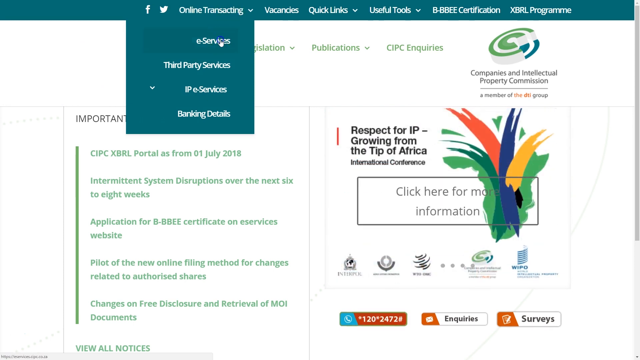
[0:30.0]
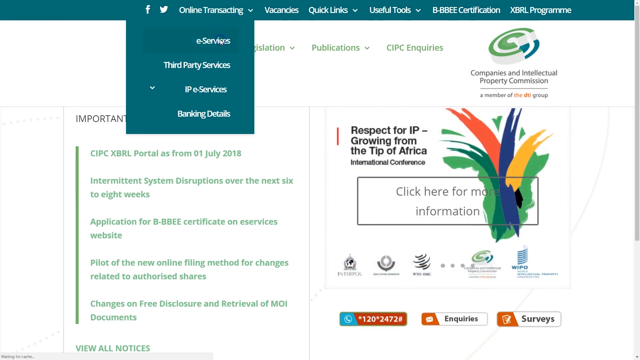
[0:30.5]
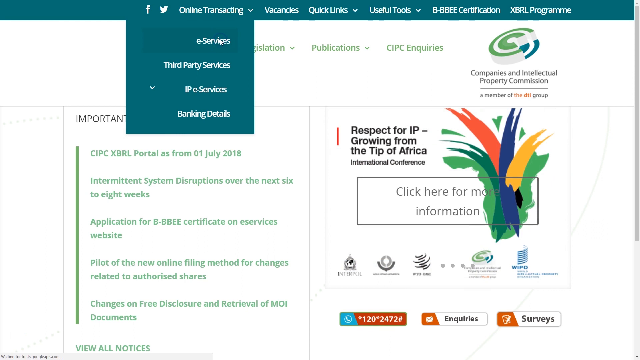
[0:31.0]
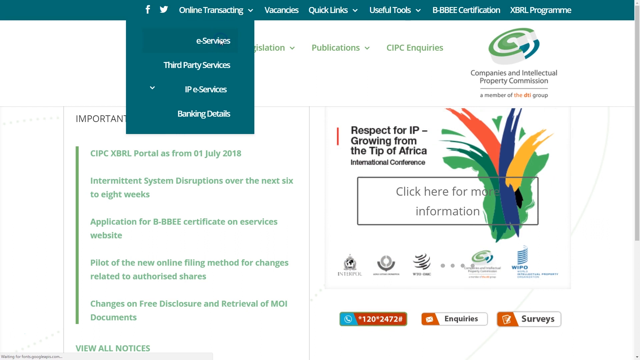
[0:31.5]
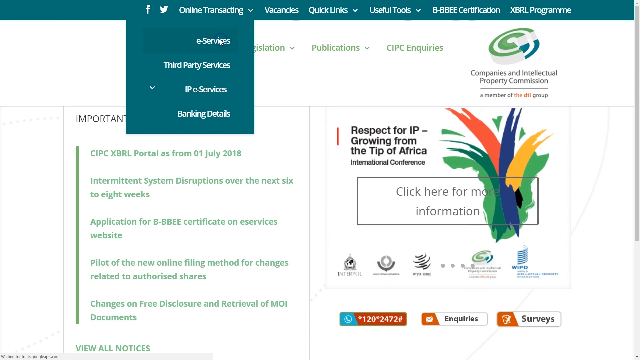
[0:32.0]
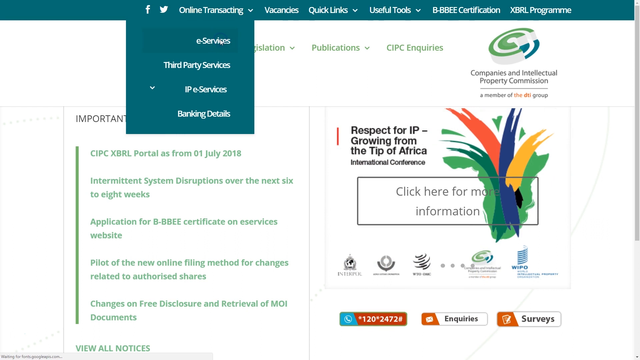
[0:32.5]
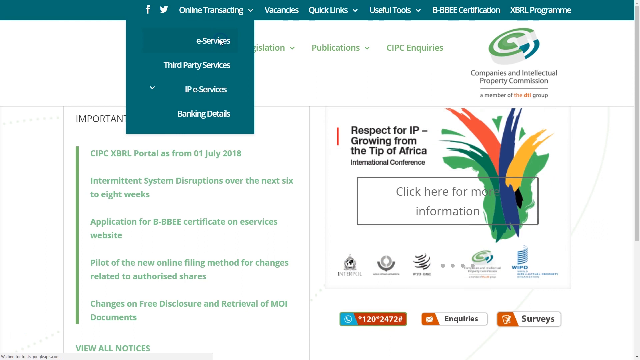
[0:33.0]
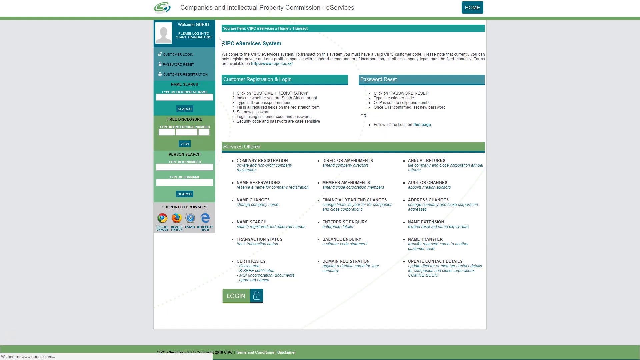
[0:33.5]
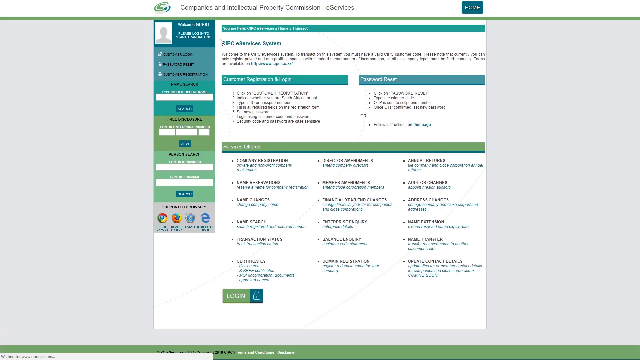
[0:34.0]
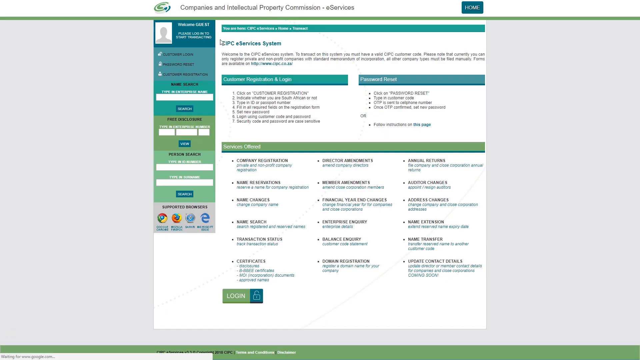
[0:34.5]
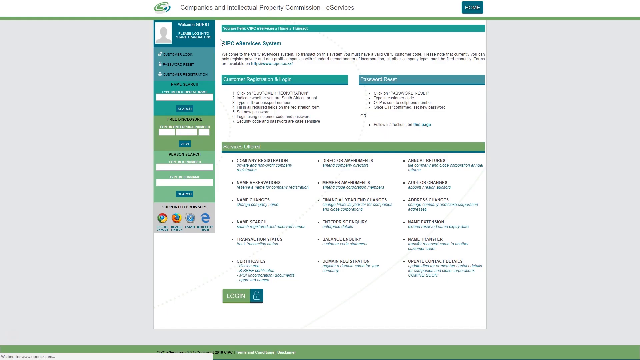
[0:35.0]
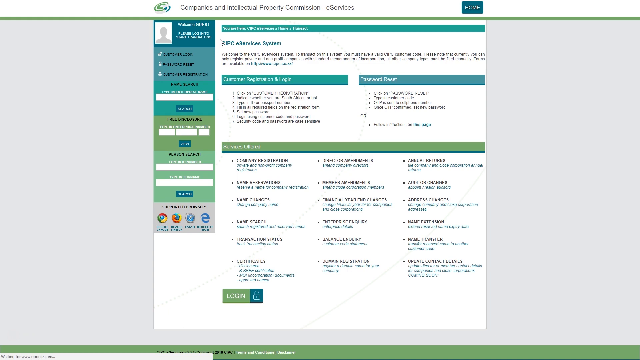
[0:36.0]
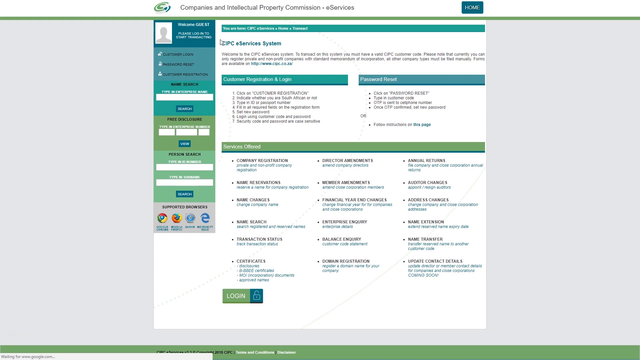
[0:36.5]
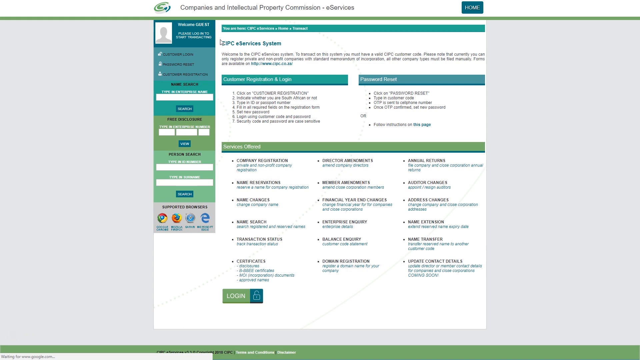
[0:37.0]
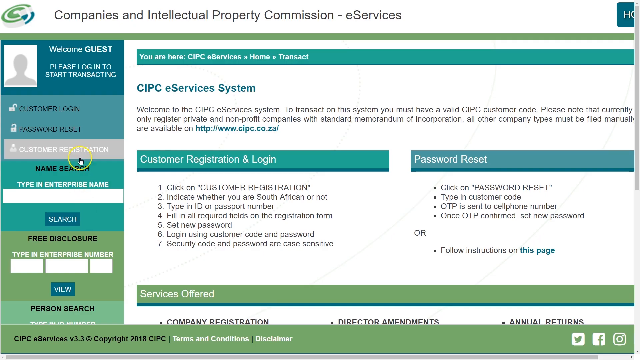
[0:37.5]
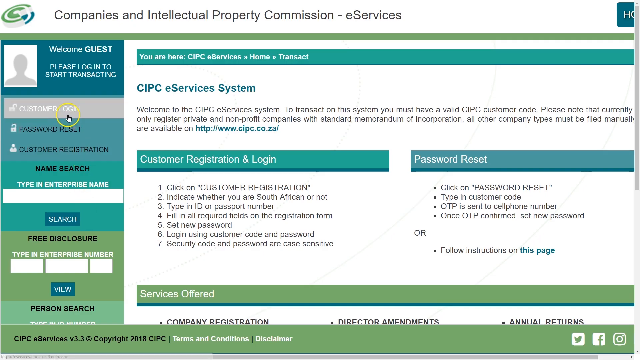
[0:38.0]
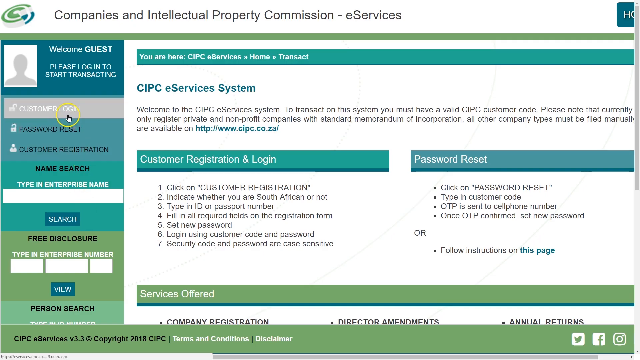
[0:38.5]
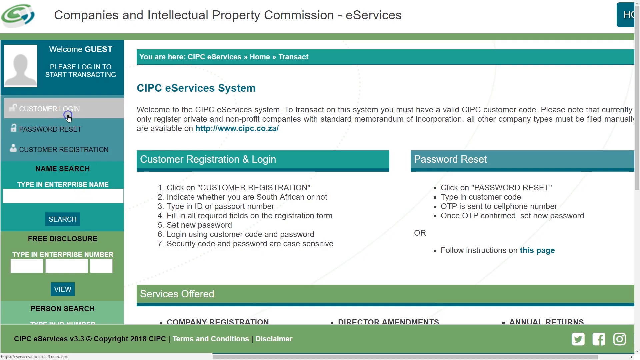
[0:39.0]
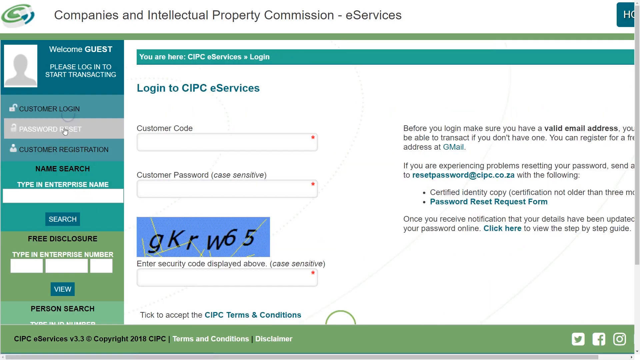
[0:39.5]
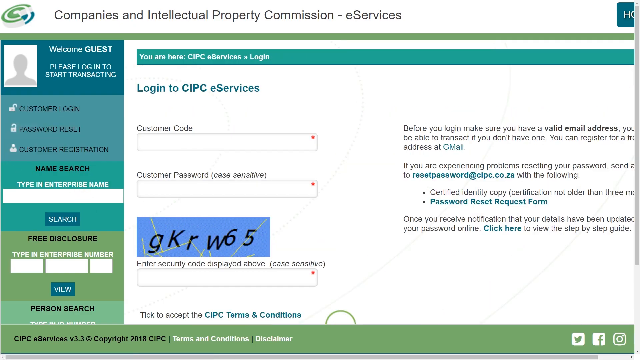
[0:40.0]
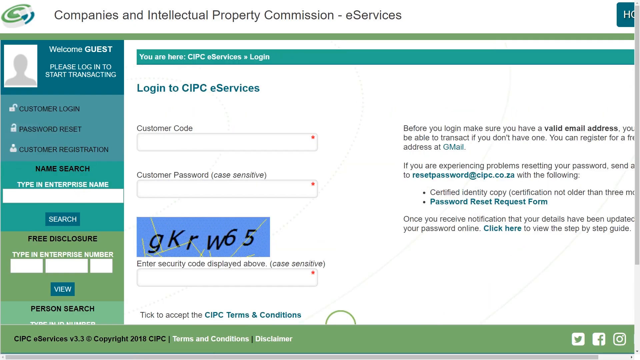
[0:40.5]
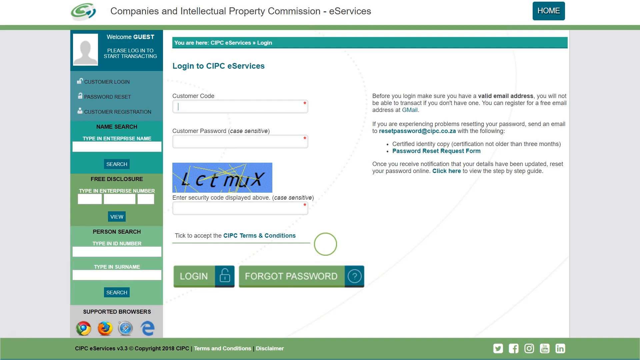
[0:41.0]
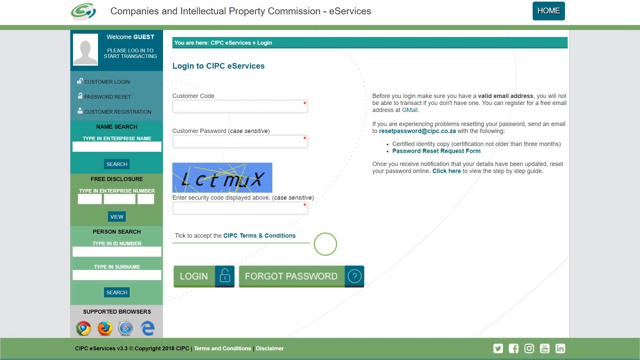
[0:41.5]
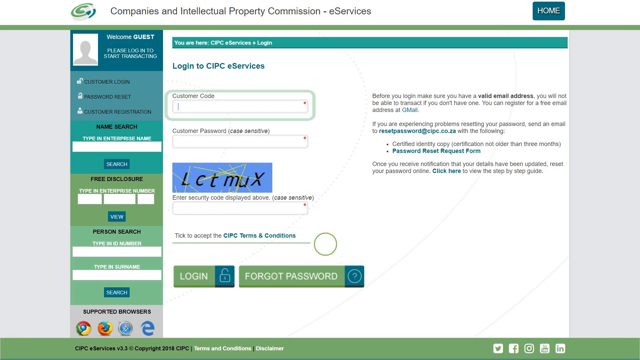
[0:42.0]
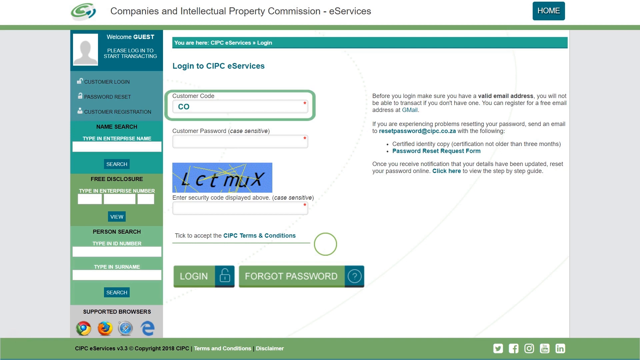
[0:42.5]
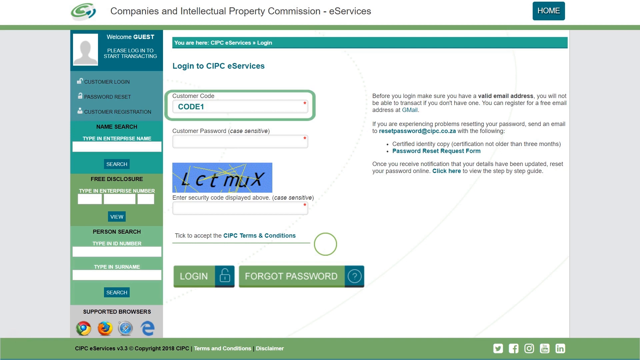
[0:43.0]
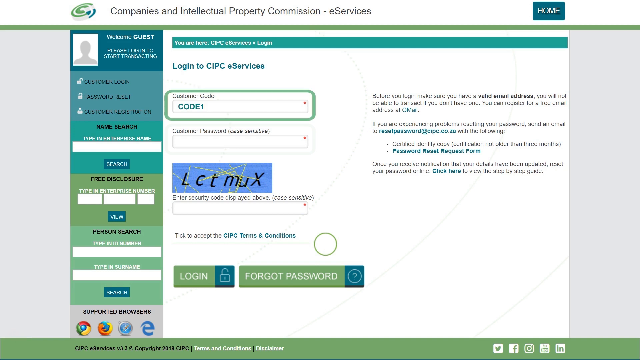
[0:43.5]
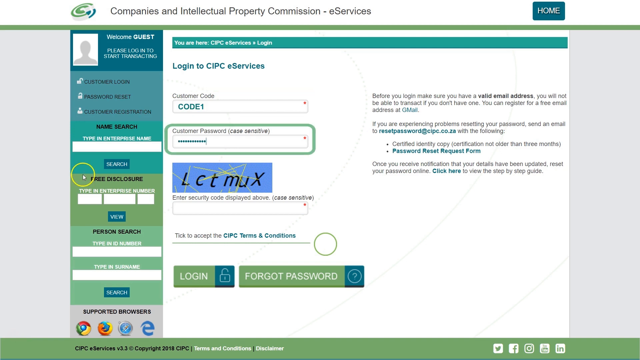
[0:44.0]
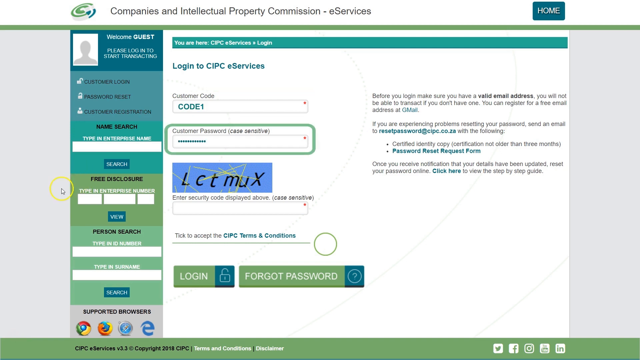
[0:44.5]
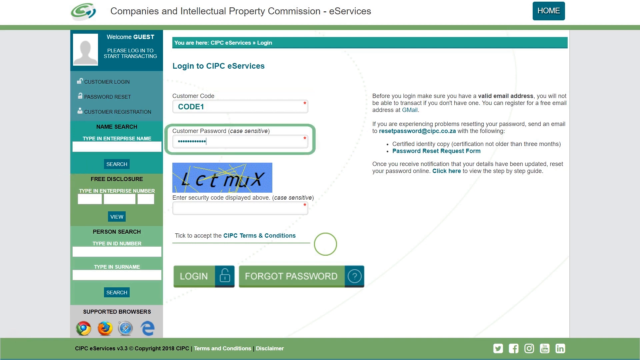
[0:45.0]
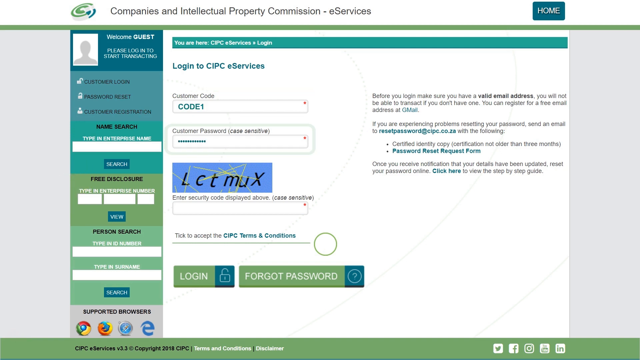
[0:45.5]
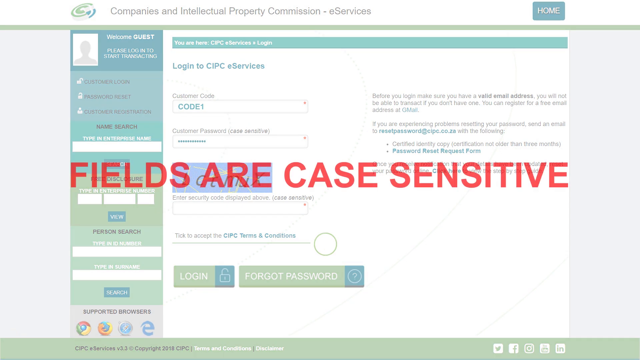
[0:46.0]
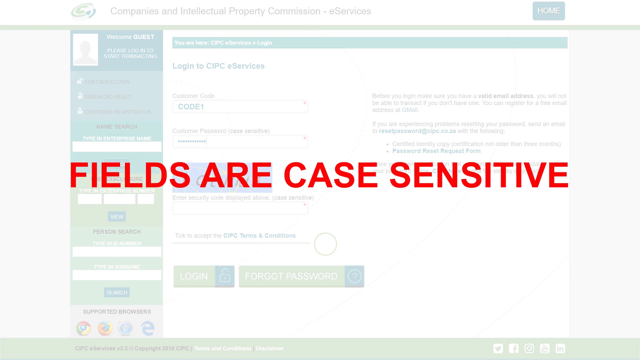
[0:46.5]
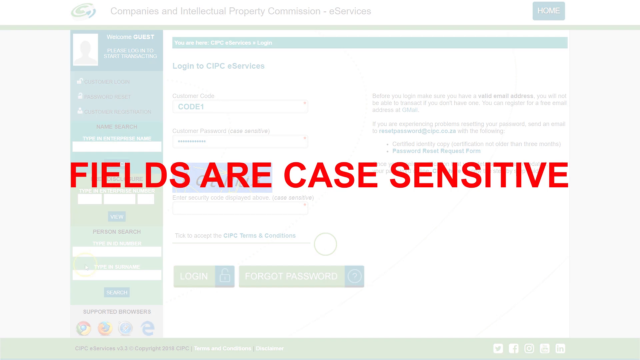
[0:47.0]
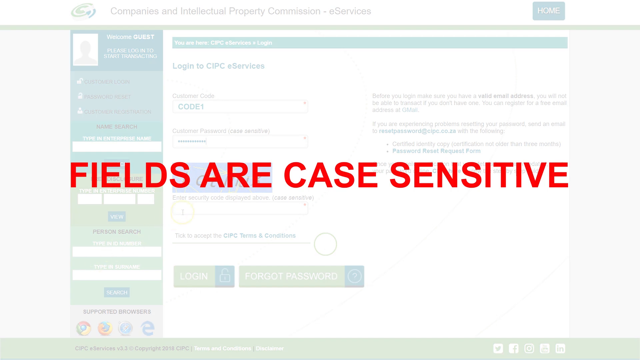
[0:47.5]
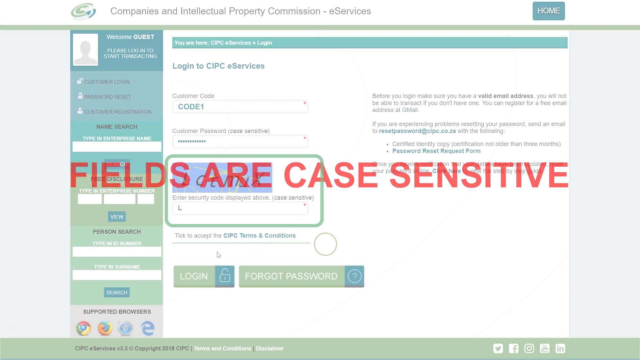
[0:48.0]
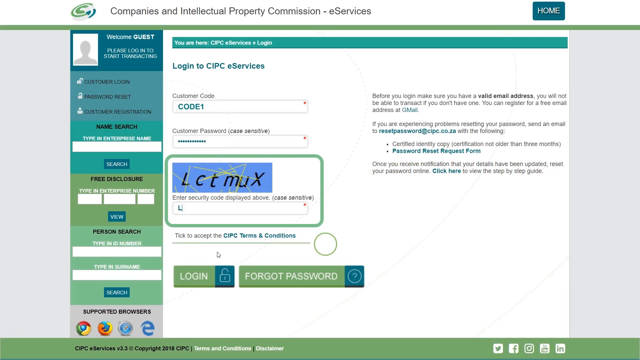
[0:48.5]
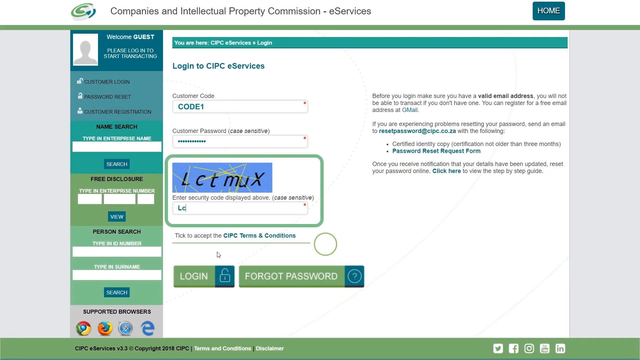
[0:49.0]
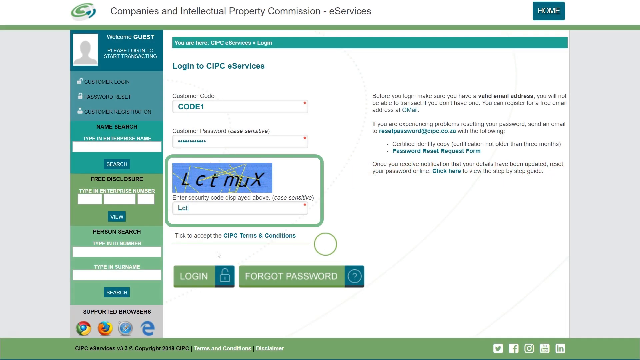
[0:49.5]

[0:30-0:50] A front page has a colorful, flowery design on the right side. It reads "Respect for IP growing from the tip of Africa. Click here for more information." This introductory informational sheet with lots of information is shown briefly before the view changes to another information-heavy sheet with a white background. Categories on it are highlighted by horizontal green and blue bars, with lists of information underneath, especially under the long green bar. In the upper left corner is a vertical bar of colors that also holds information. On the right side, halfway down the screen, are colorful icons with blue labels.